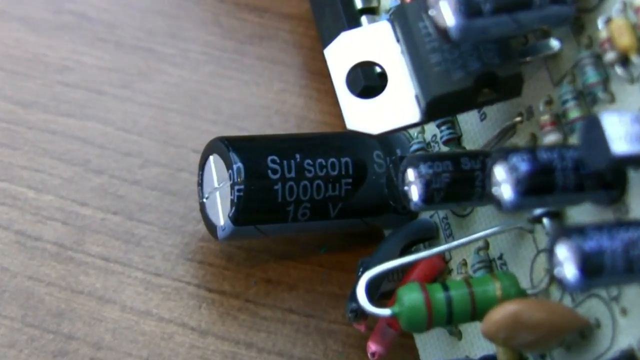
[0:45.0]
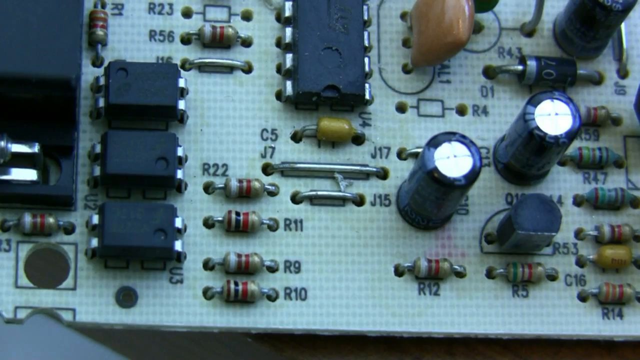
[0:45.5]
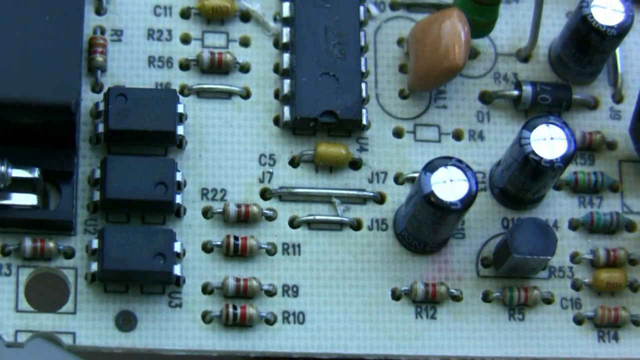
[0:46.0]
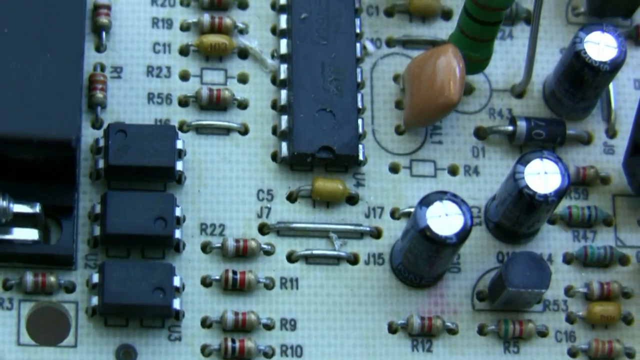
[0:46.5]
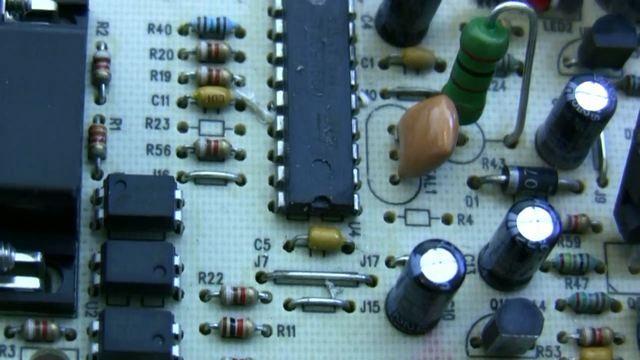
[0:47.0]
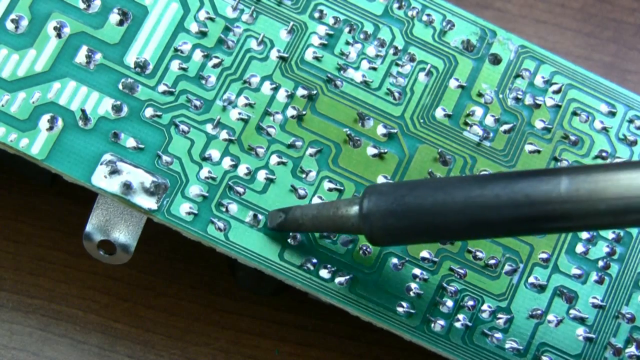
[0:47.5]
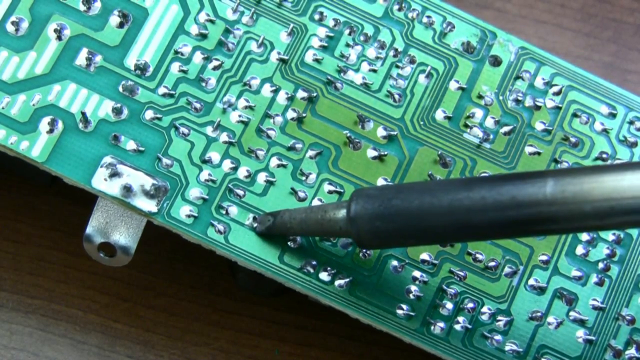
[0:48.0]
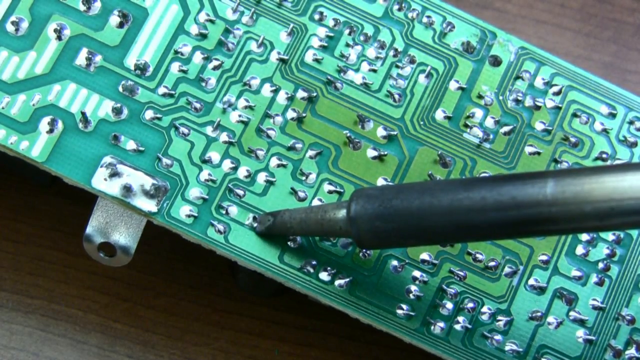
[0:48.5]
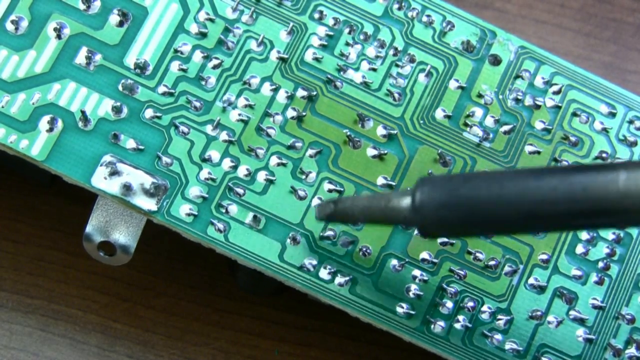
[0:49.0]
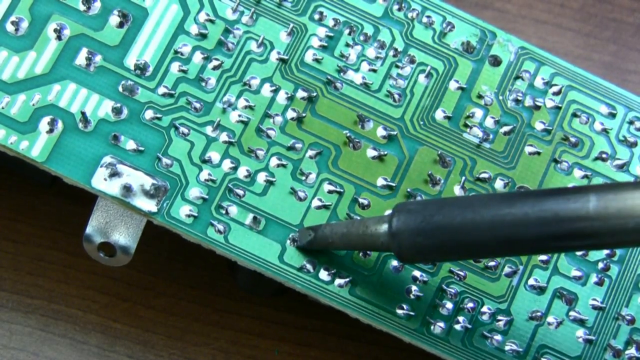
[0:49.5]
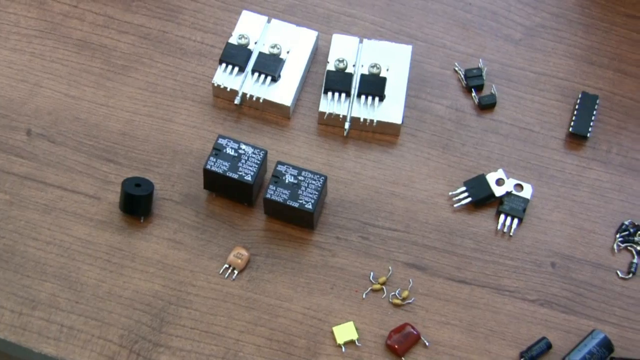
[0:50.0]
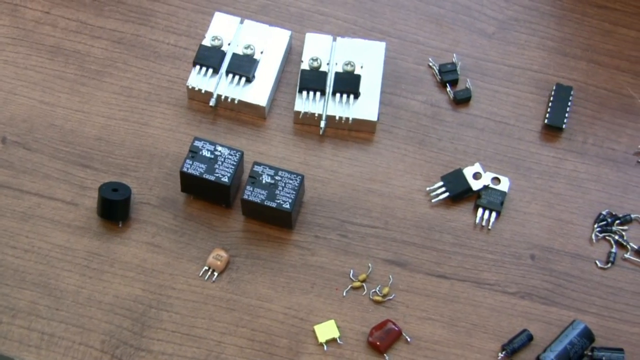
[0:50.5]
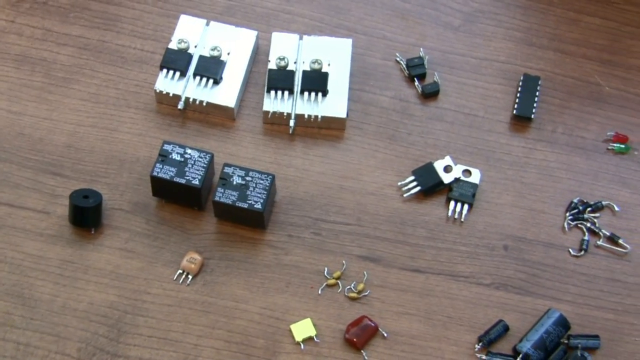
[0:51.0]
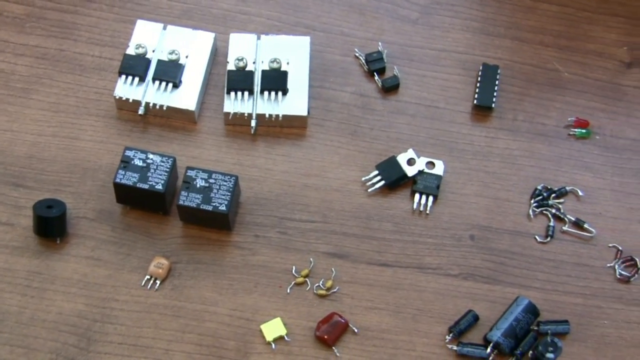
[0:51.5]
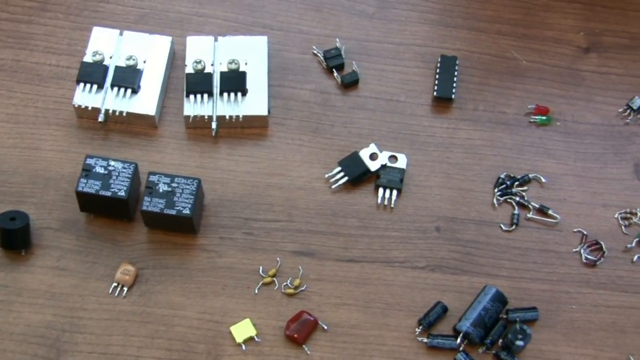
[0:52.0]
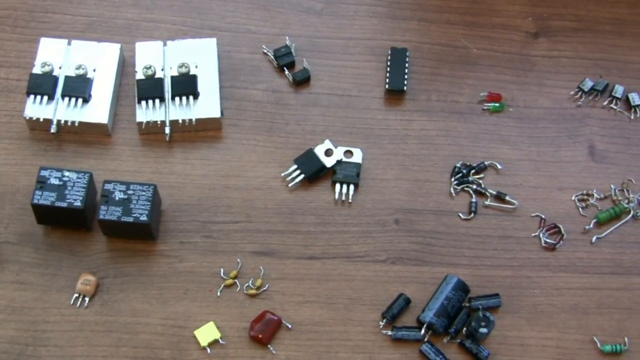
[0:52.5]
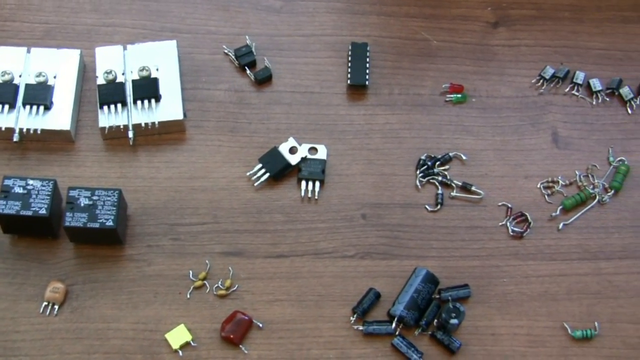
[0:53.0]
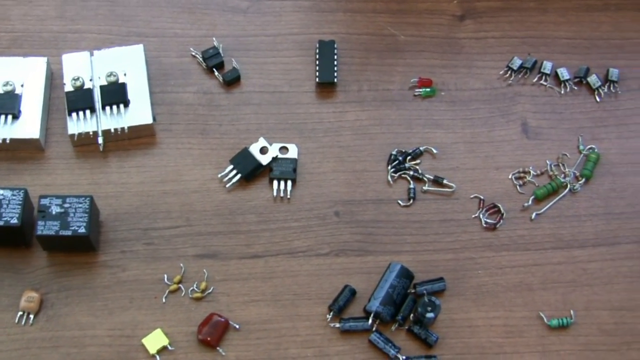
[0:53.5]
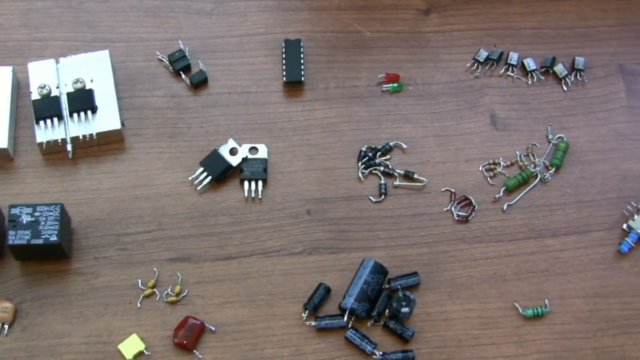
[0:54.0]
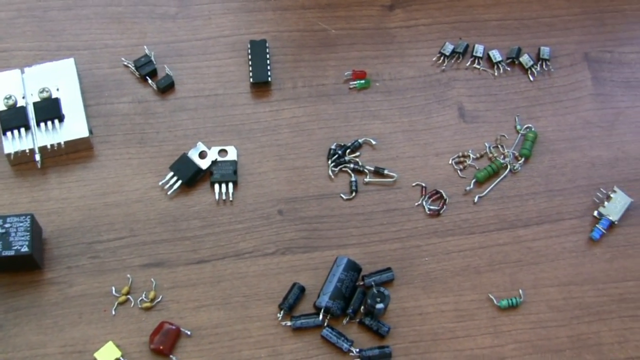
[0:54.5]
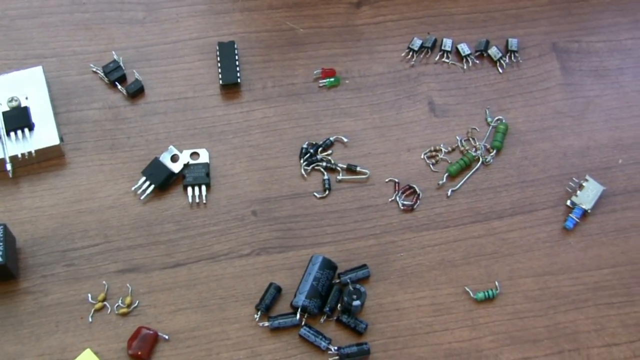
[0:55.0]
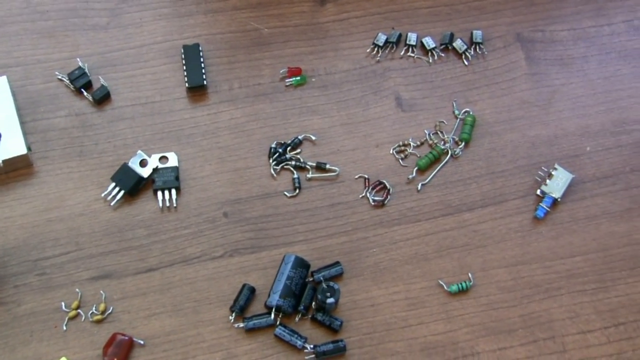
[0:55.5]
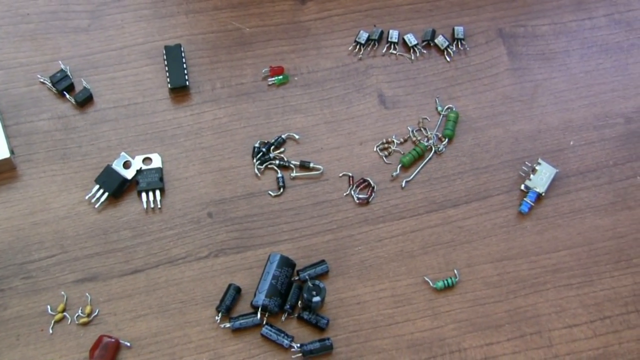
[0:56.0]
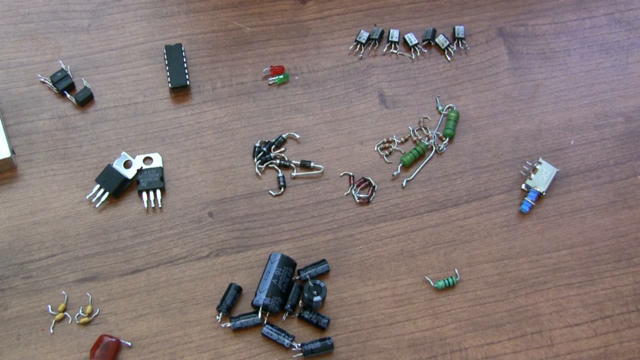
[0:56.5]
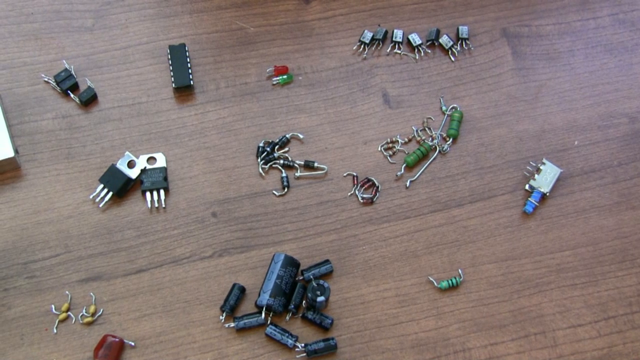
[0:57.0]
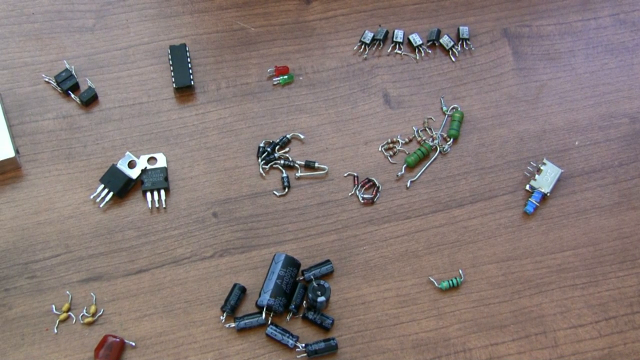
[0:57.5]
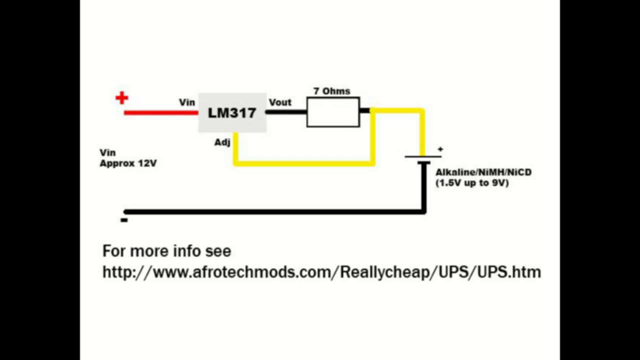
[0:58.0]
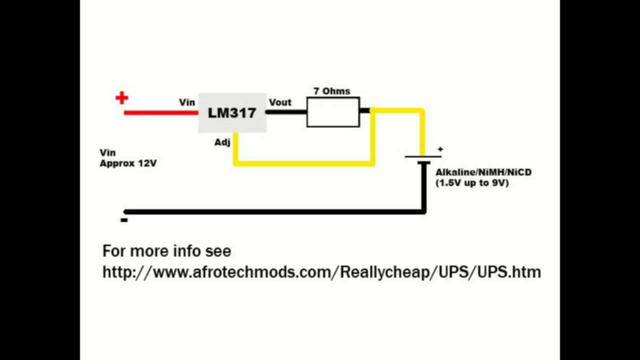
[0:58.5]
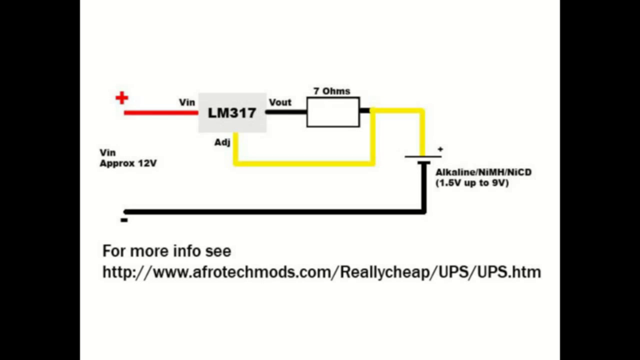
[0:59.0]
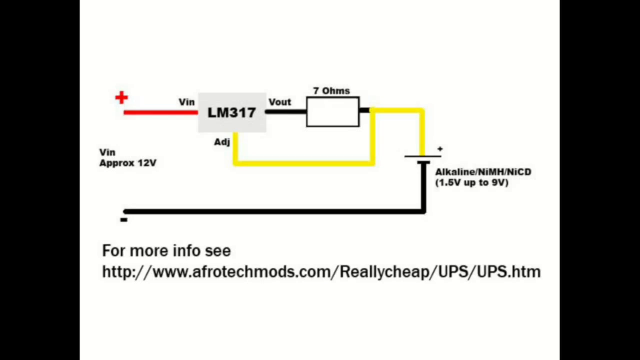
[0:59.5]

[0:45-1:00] The video is about how to turn an old UPS, an uninterruptible power supply, into an alkaline battery. A green circuit board with lines through it looks like a maze and has 50 or so little silver metal dots. A soldering tool has a black handle and a gray metal tip. Components of the power supply are on a desk. Four black-handled tools with three white lines coming out of them are screwed to a larger puck-type device. Another piece of the equipment looks like a key, with a black handle and three pieces coming out of it; there are two of those.